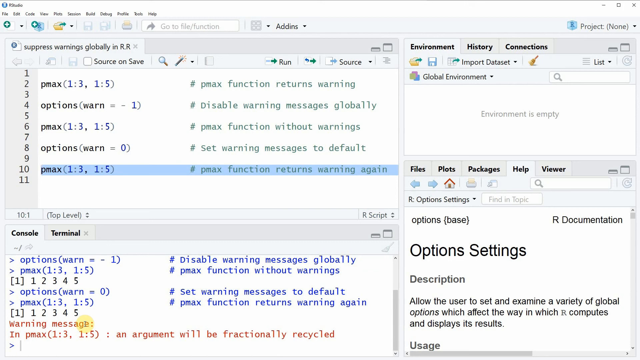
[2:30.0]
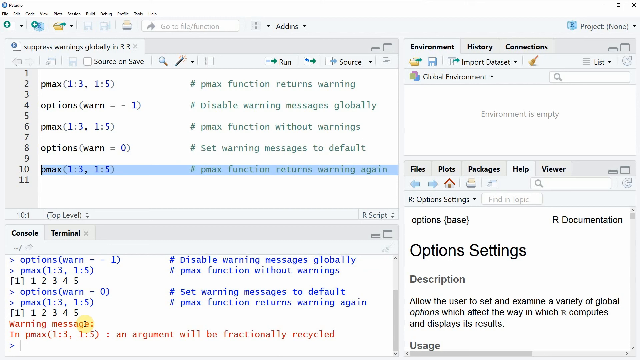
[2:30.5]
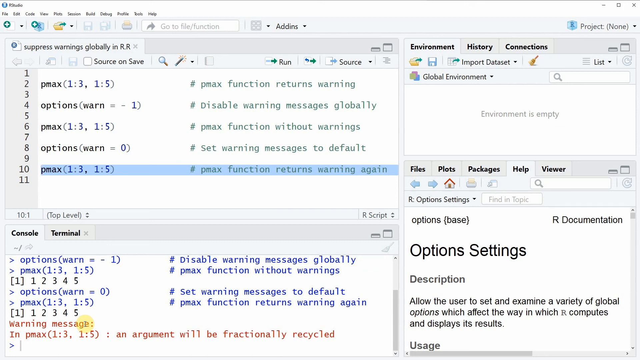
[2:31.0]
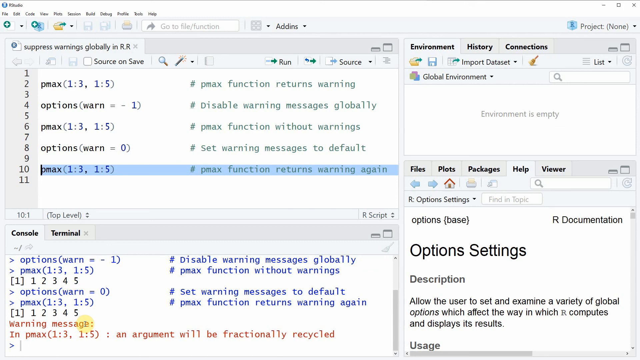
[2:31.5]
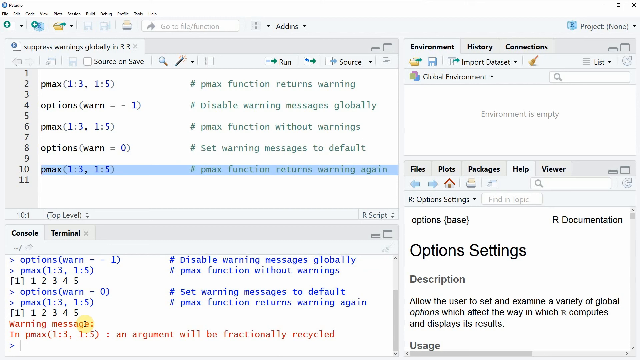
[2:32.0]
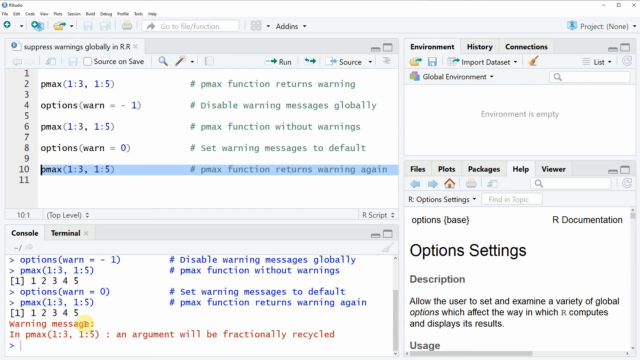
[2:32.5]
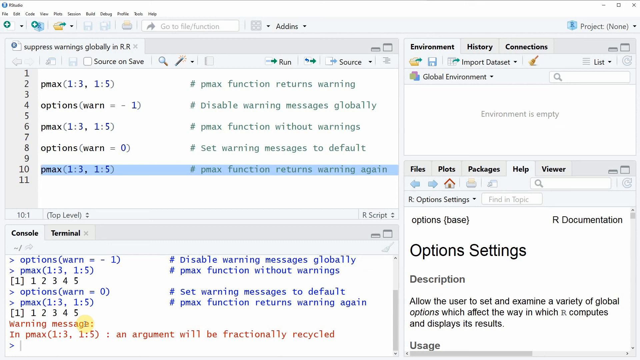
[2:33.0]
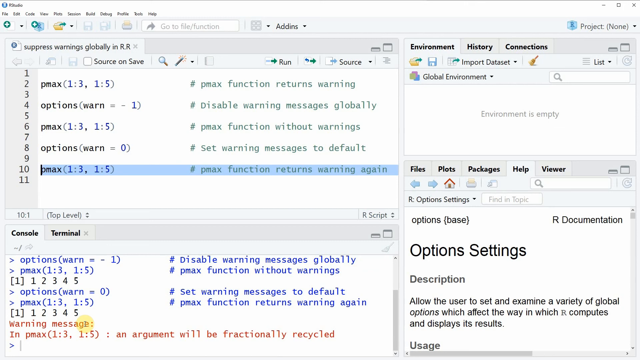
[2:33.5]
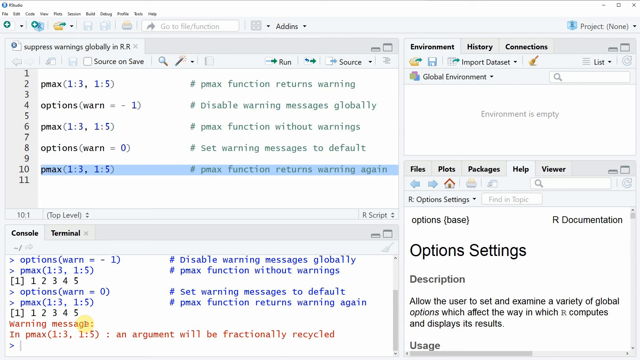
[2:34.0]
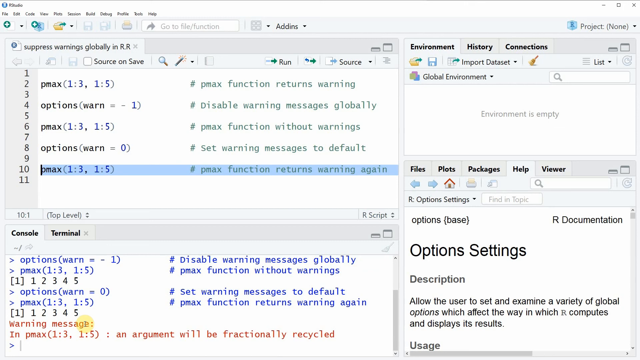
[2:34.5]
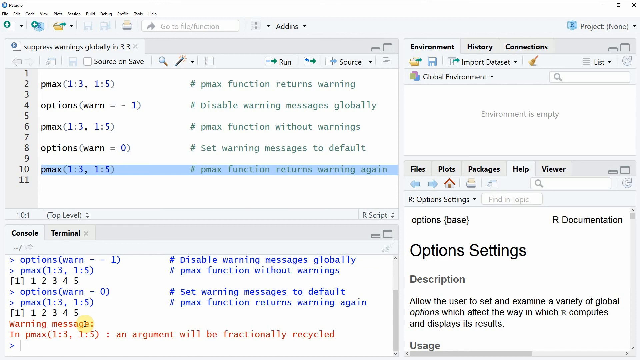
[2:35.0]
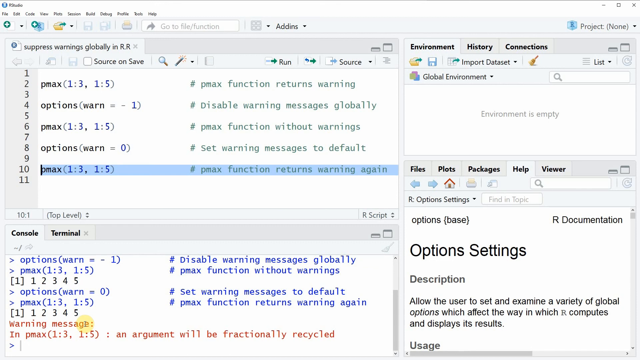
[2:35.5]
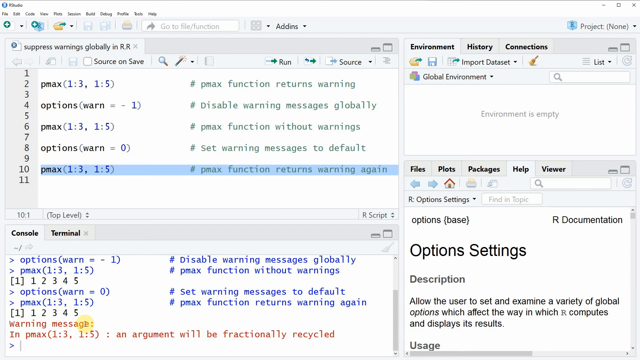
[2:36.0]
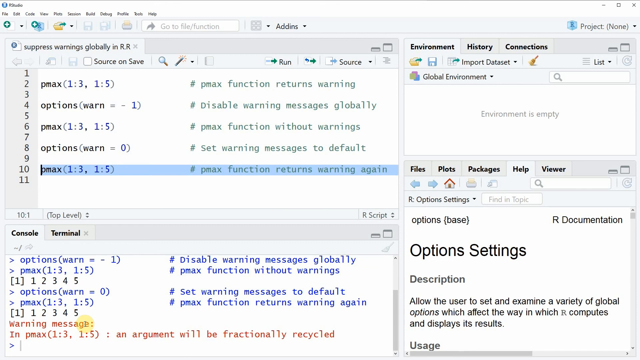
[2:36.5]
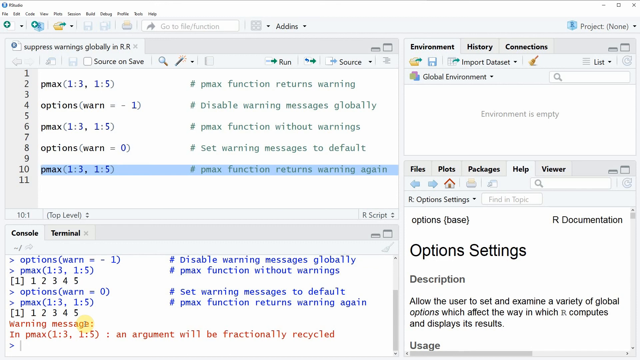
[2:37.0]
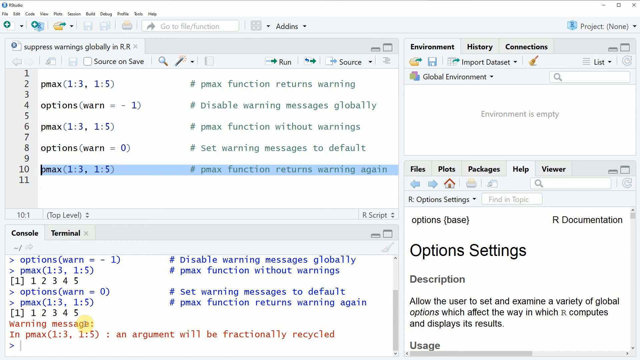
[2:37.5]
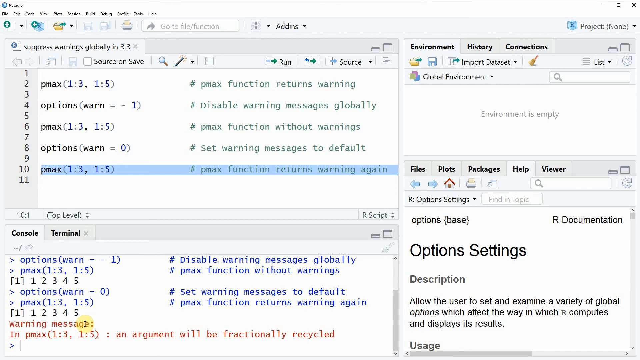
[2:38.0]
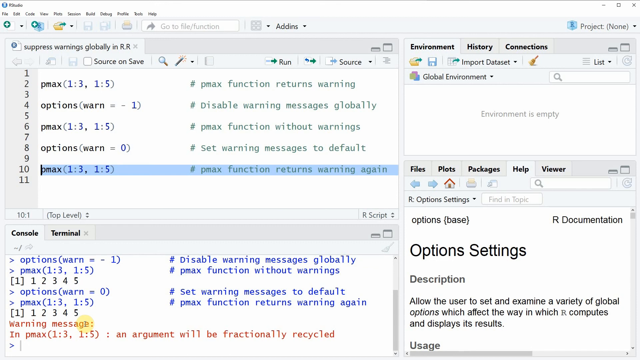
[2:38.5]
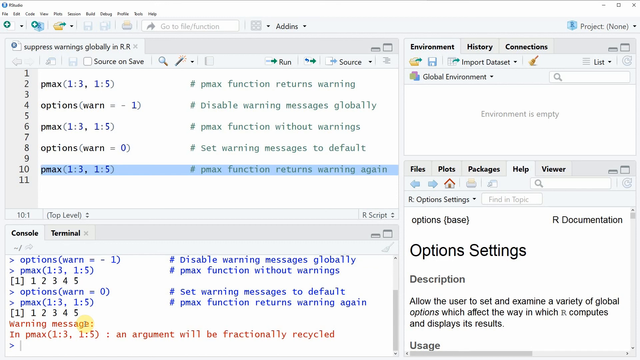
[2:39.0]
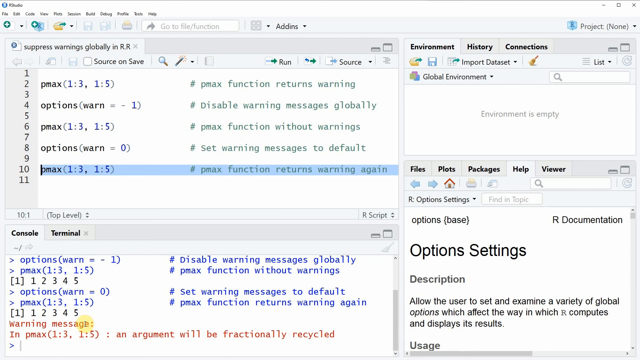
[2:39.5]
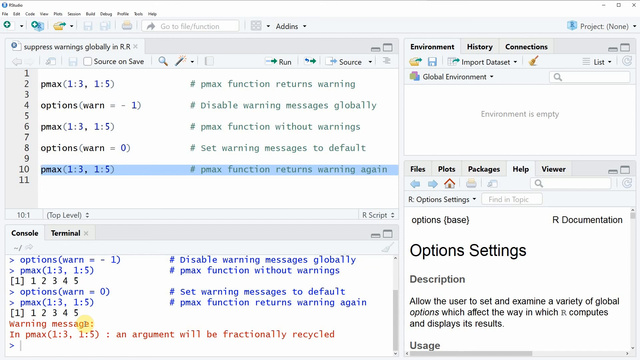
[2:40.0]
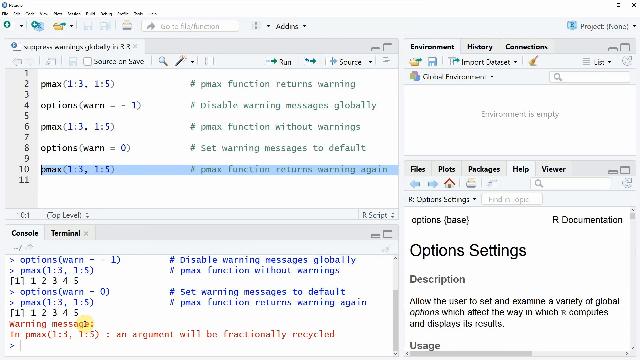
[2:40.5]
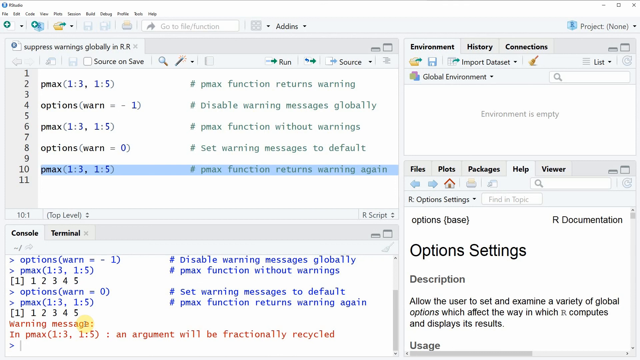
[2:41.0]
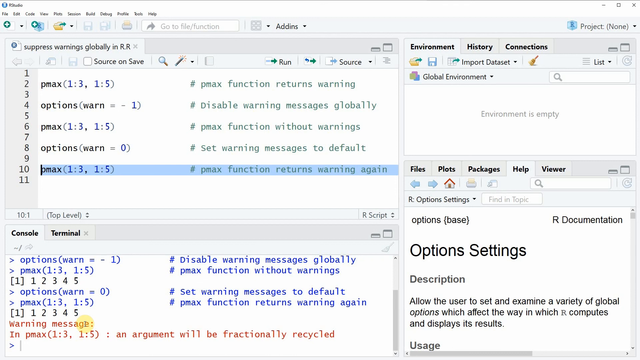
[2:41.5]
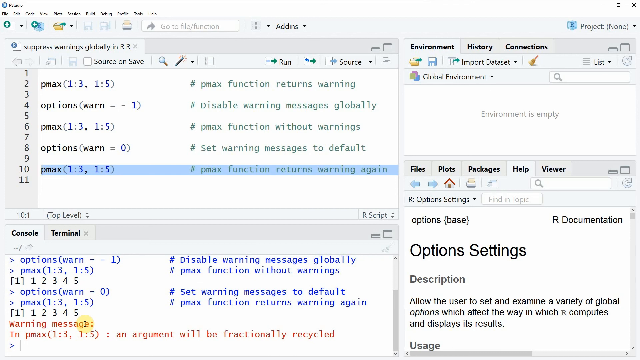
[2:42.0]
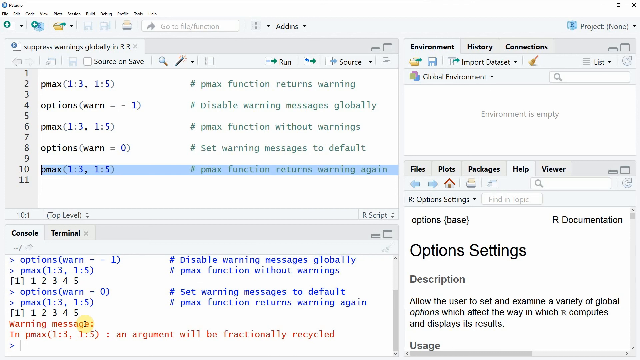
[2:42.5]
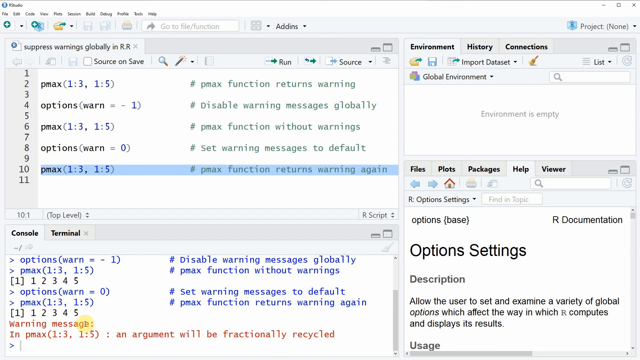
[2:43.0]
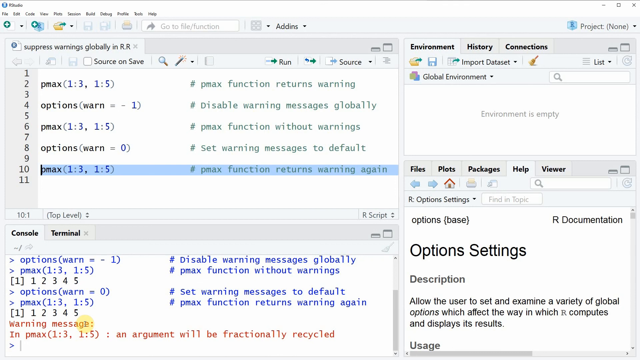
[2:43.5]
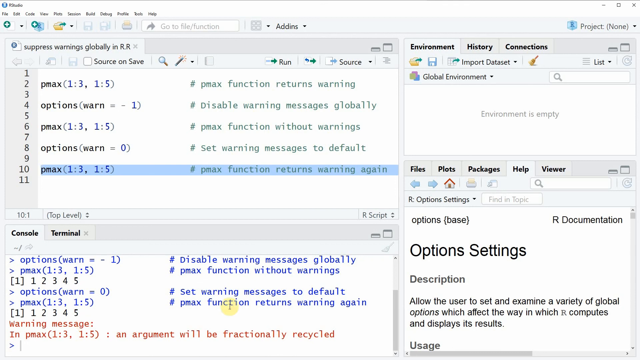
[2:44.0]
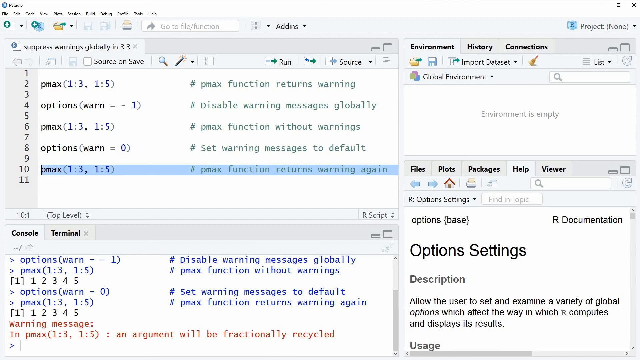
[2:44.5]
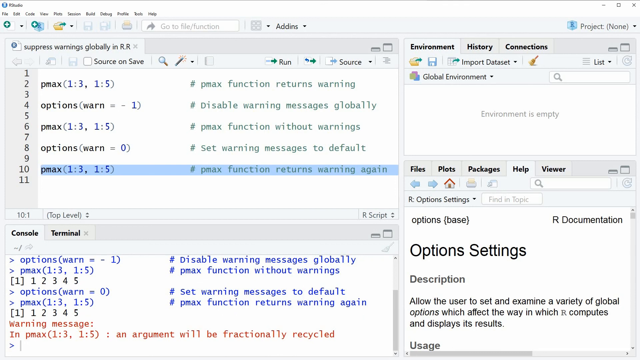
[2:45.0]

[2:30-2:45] The unidentified coding page shows the code sequence pmax, options, pmax, options and pmax, along with comments on the inputs. The last pmax input has a comment stating that the pmax function returns a warning again, and the person runs the code. The output displays the pmax warning message reading "argument will be functionally recycled". The options setting panel is shown, describing that users can set and examine a variety of global options which affect the warnings the code computes and displays.